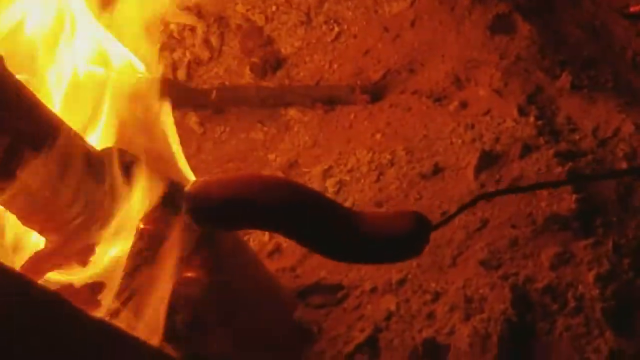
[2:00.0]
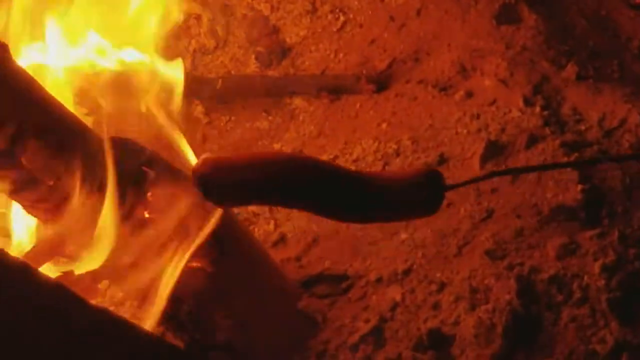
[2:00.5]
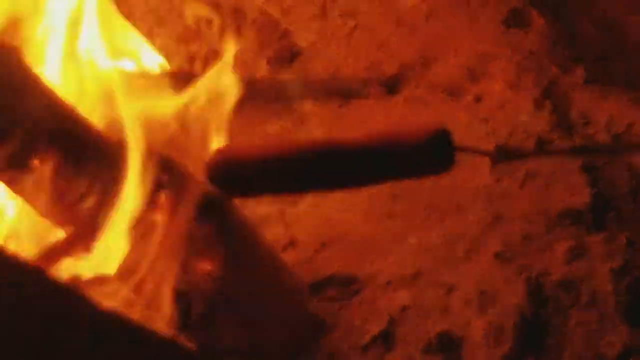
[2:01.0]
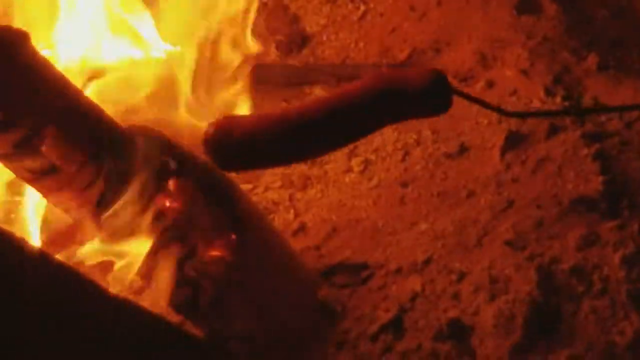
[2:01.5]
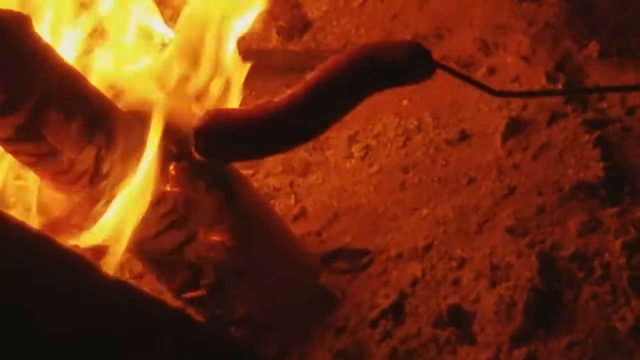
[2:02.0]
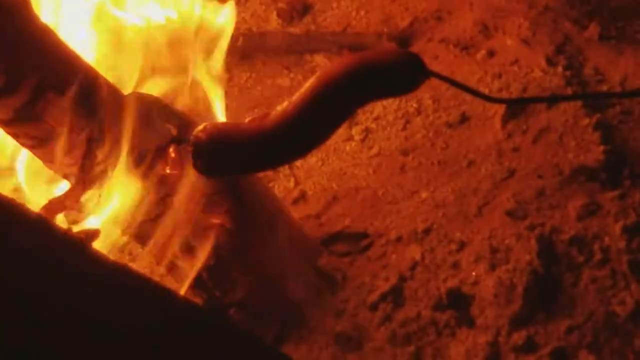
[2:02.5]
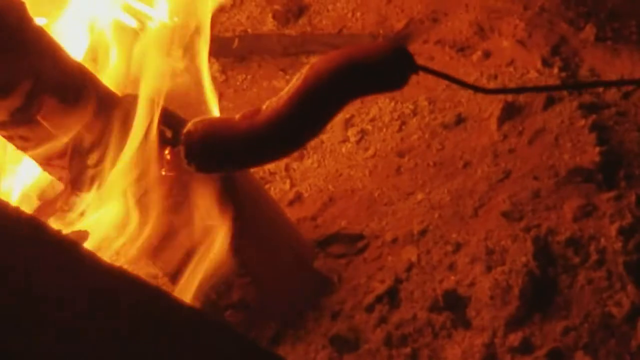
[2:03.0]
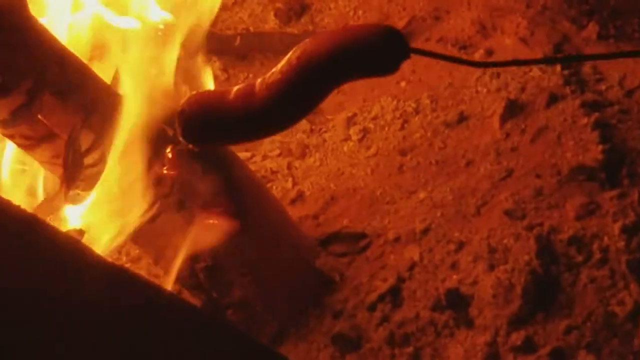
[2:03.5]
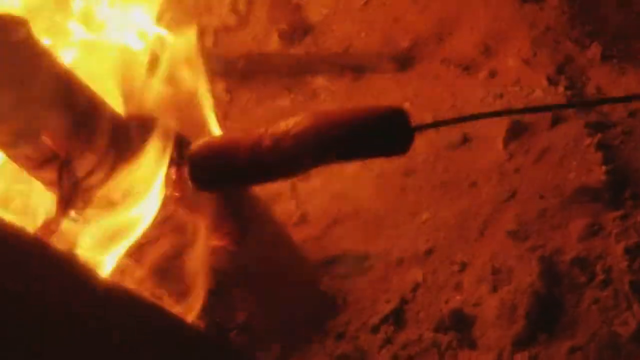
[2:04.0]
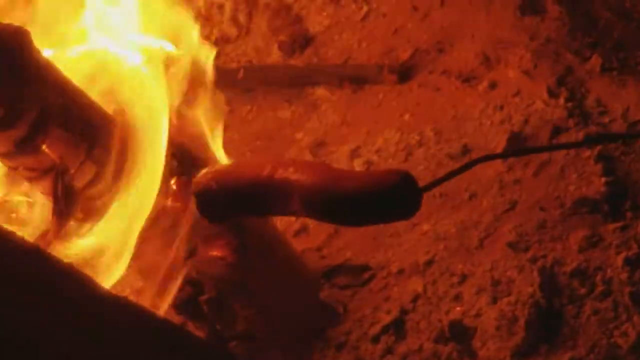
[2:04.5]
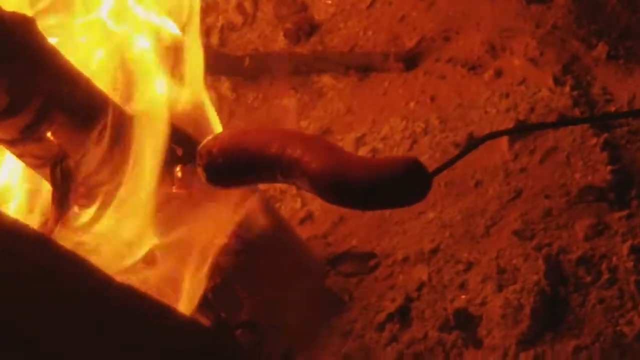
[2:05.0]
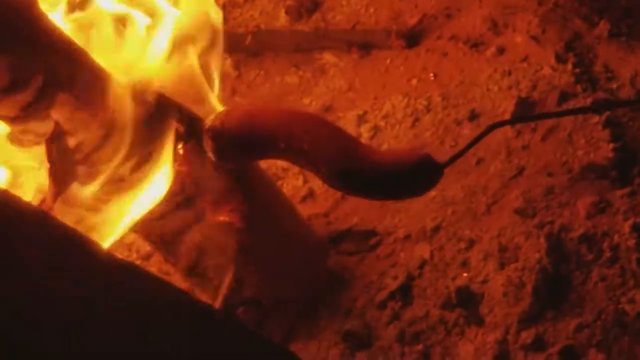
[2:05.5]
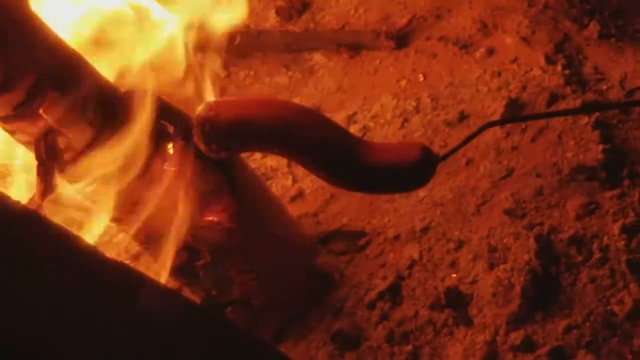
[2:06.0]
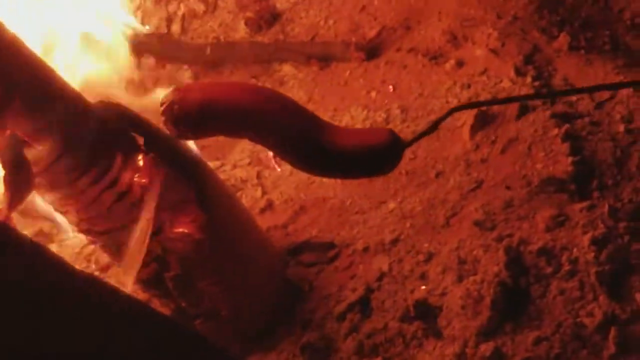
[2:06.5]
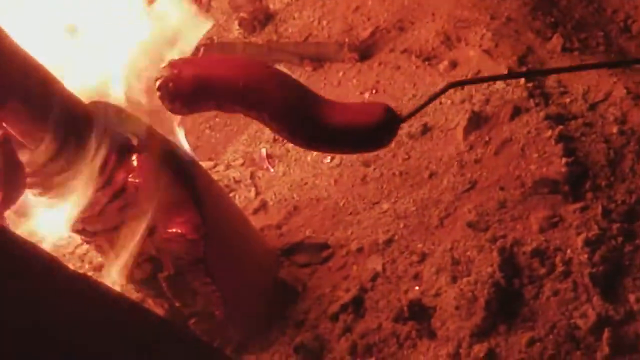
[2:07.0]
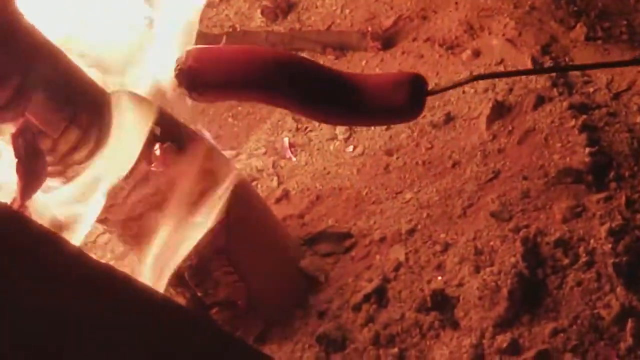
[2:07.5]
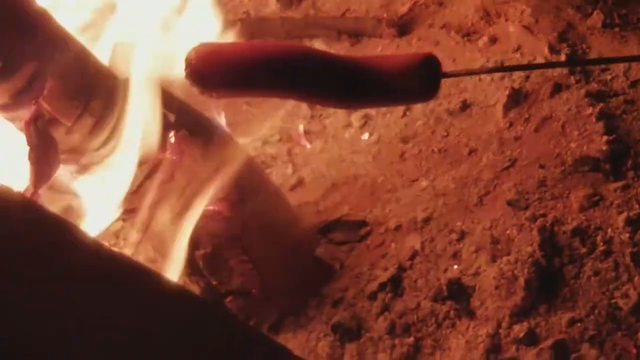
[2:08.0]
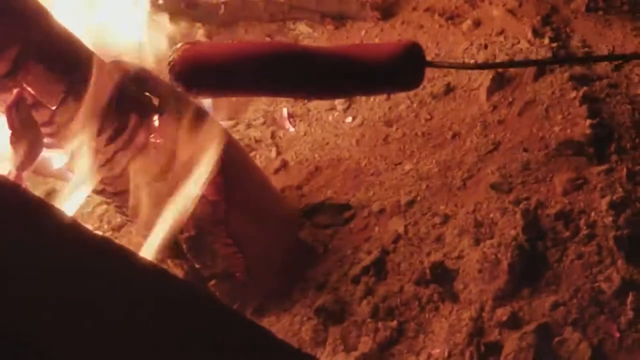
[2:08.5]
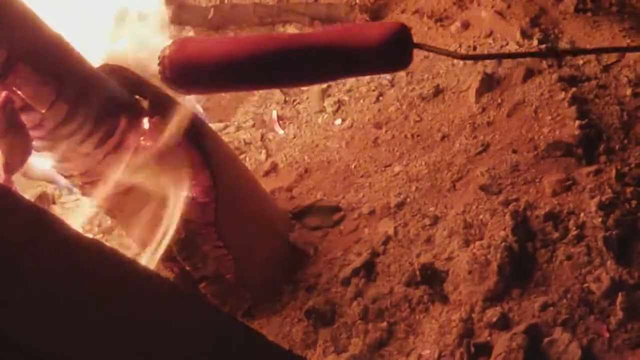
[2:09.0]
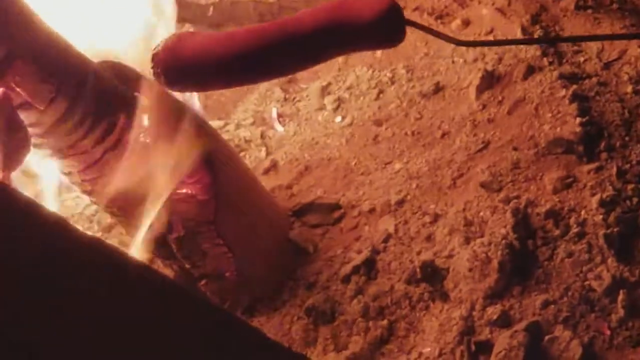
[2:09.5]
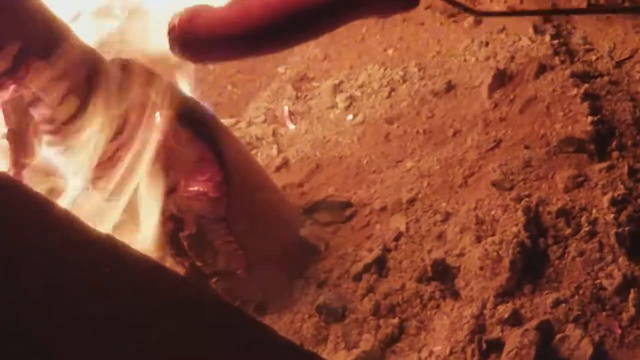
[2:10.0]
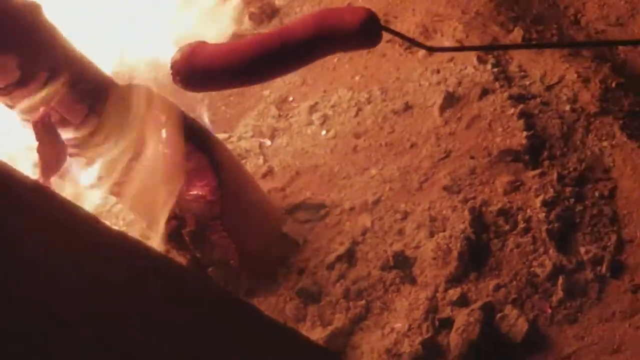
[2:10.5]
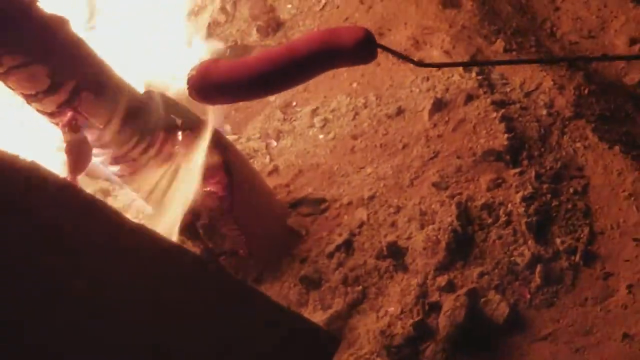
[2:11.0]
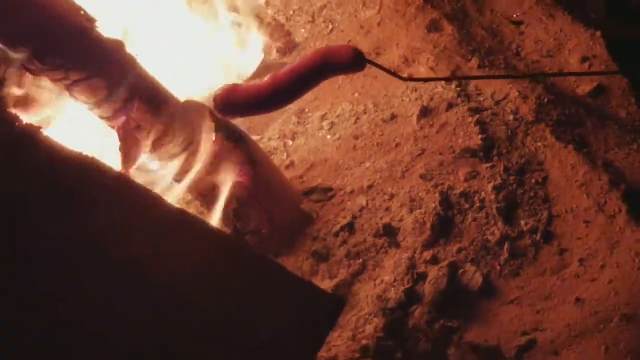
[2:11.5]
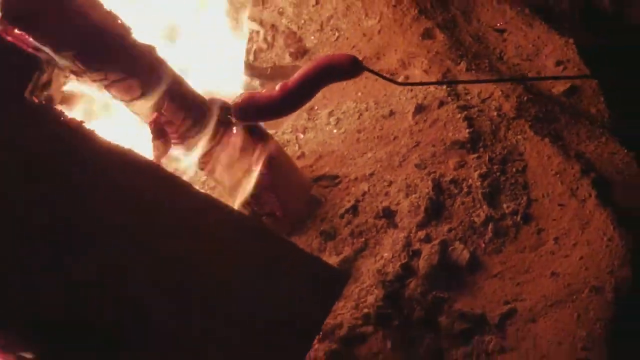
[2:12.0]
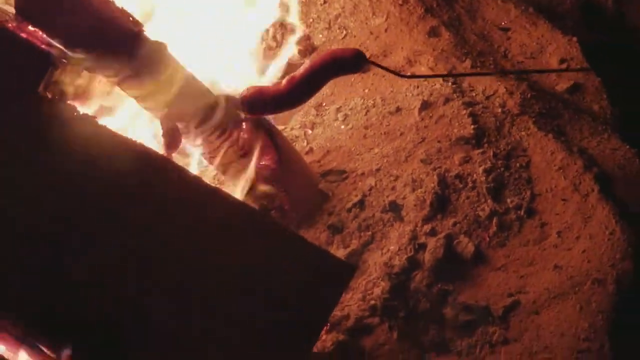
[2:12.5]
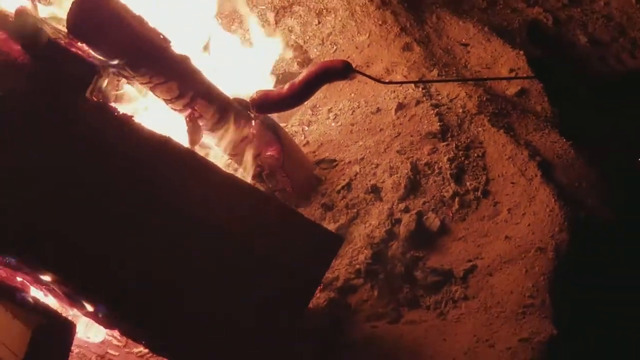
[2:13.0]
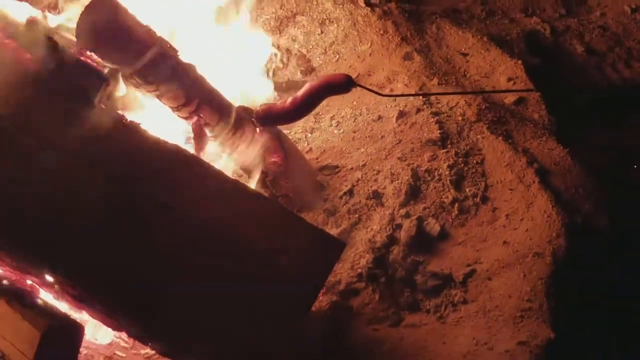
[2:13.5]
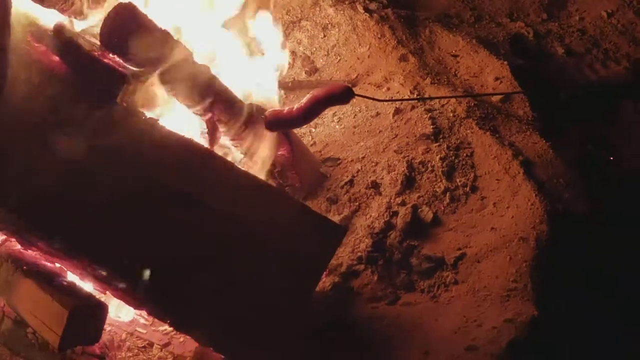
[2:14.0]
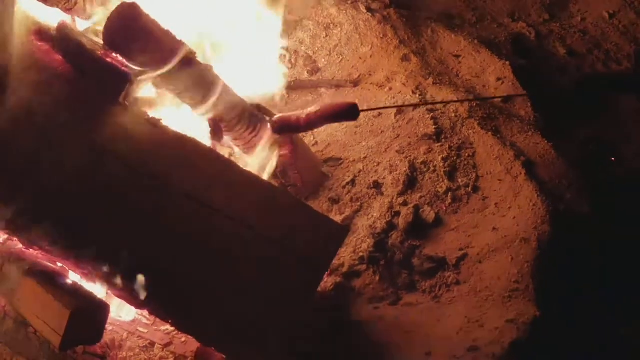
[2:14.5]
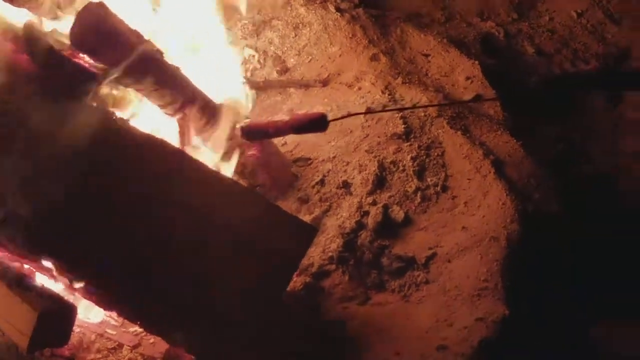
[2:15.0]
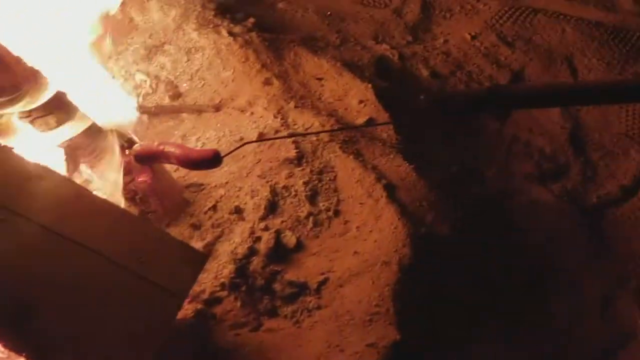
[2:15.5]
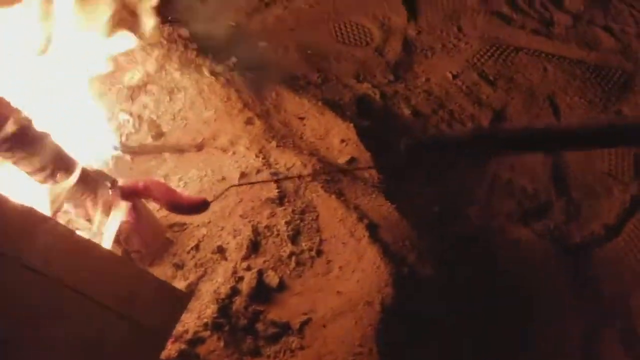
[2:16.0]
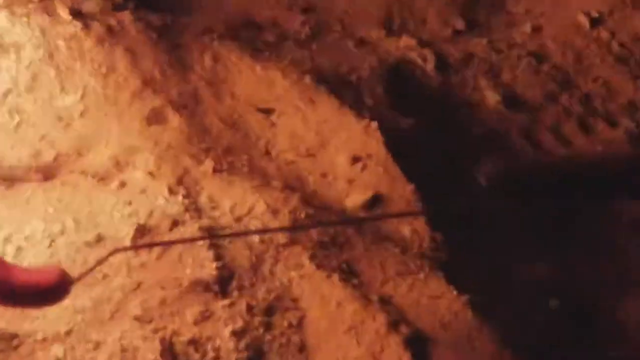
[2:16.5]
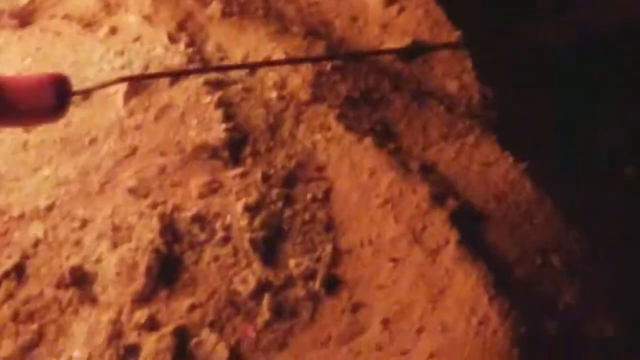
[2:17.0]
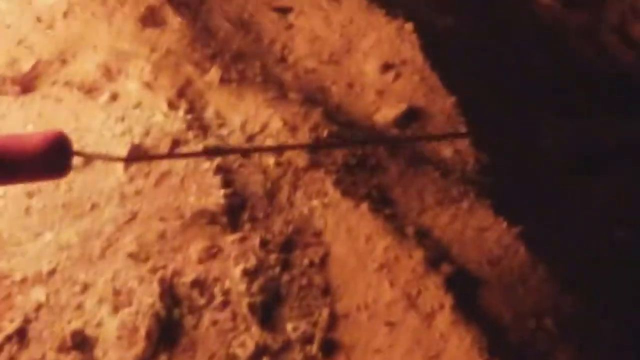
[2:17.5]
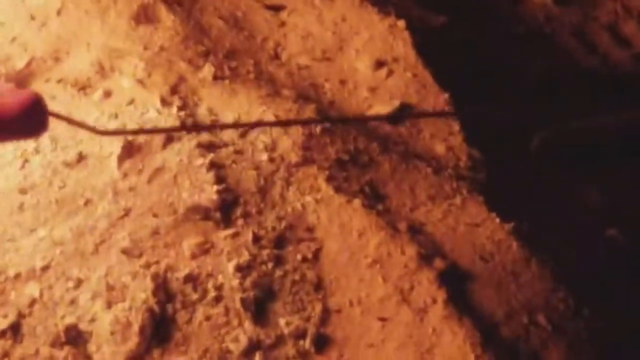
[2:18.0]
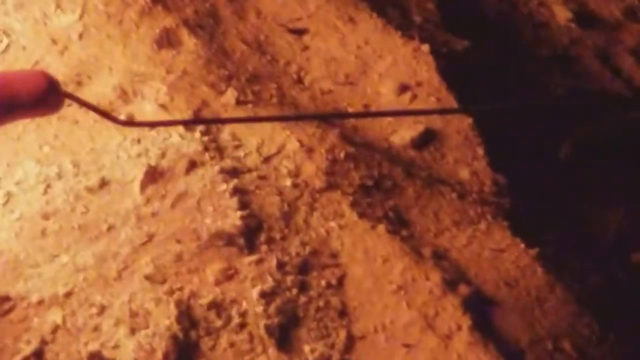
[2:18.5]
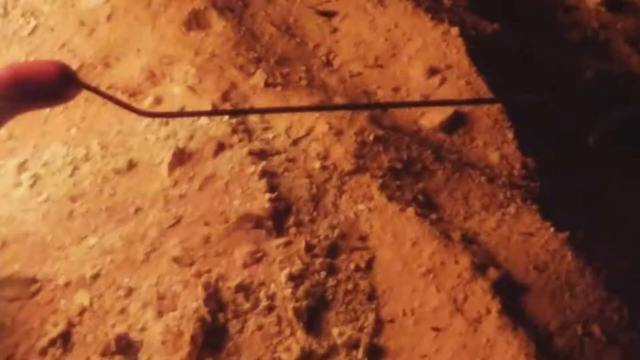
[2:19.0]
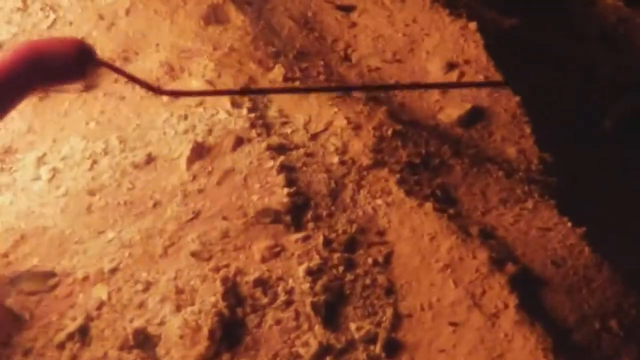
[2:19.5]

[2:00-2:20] The person keeps turning the Vienna sausage, and its color gets darker. The fire burns strongly with flames rising. No hand or person appears; only the stick turning the sausage near the fire is seen. Smoke appears as oil from the sausage drips into the rising flames, making them bigger.